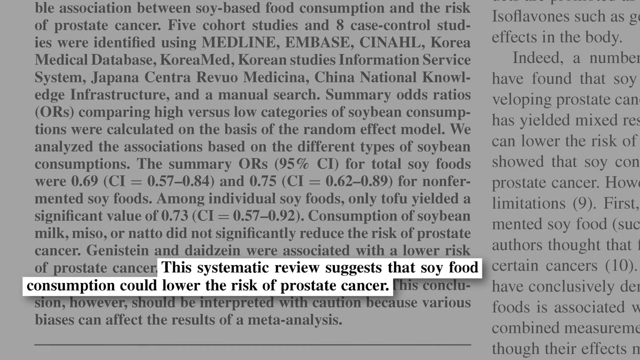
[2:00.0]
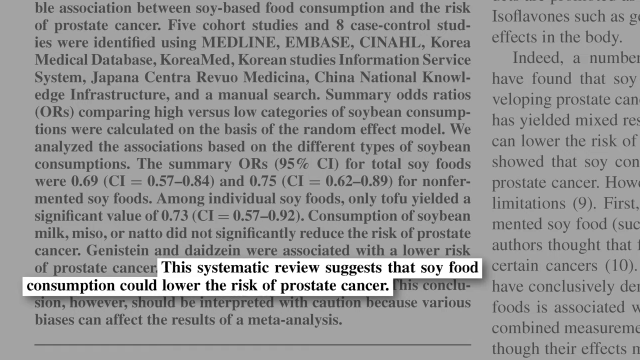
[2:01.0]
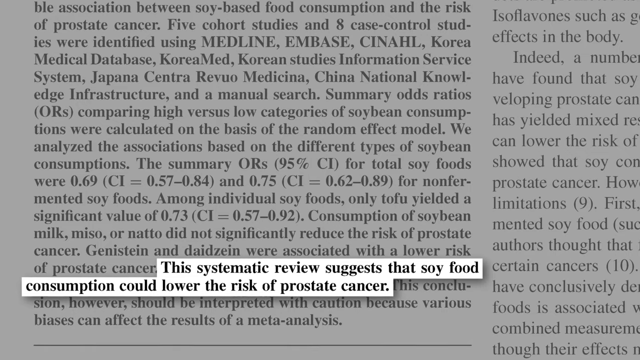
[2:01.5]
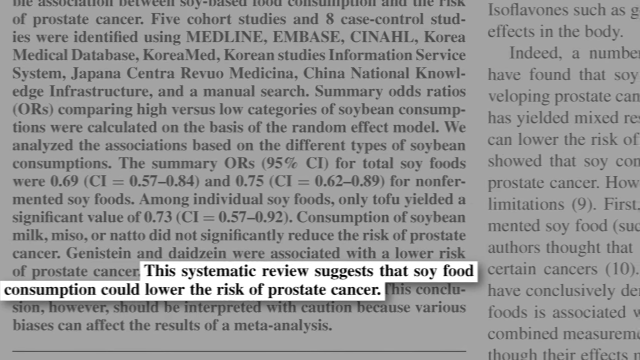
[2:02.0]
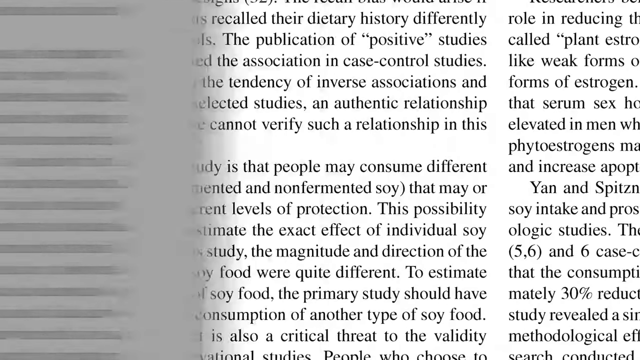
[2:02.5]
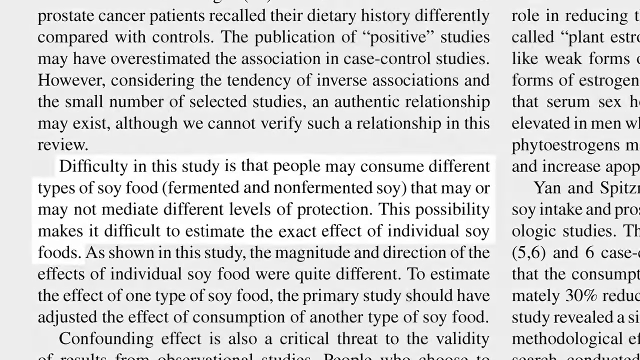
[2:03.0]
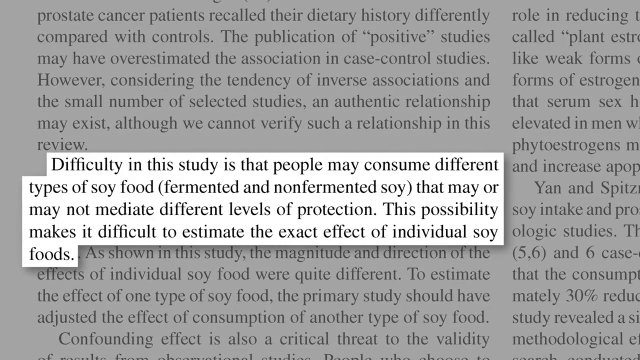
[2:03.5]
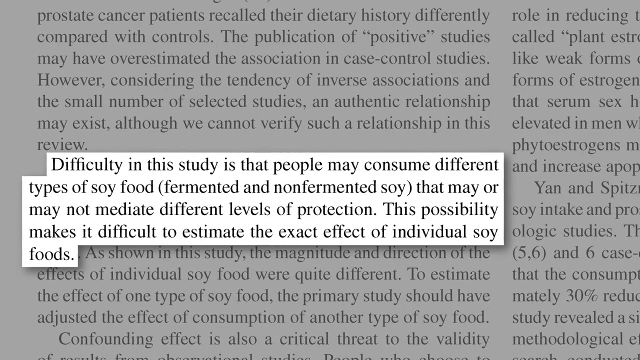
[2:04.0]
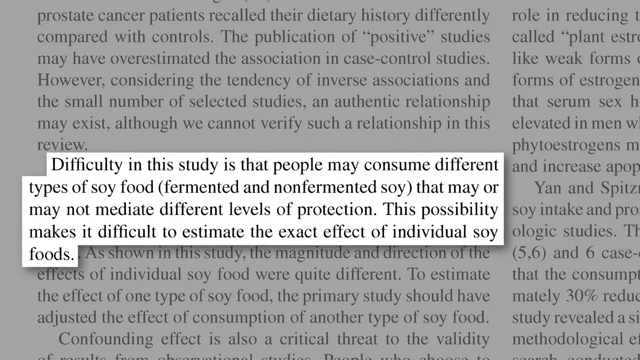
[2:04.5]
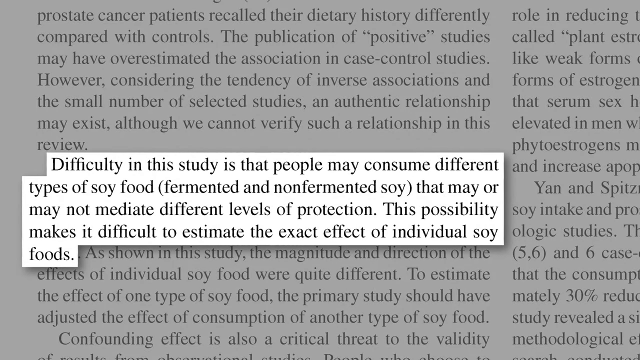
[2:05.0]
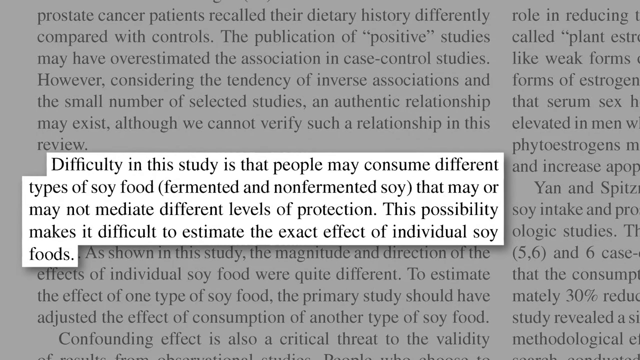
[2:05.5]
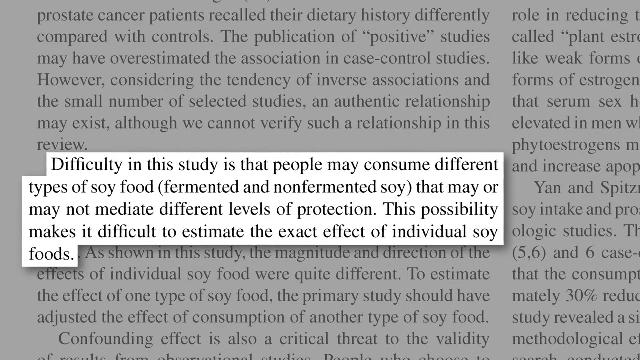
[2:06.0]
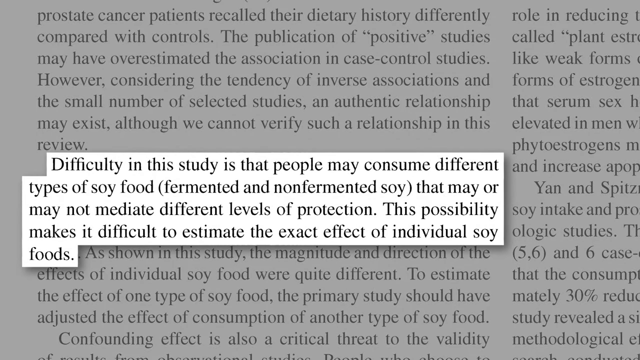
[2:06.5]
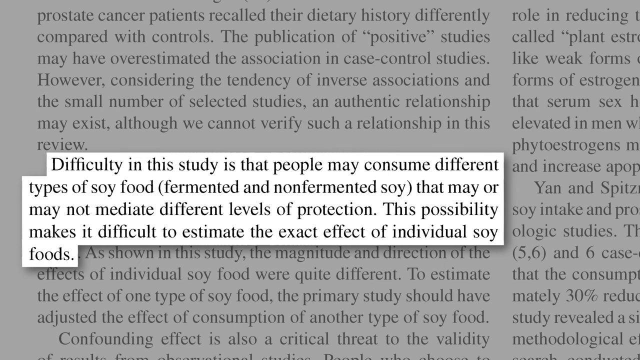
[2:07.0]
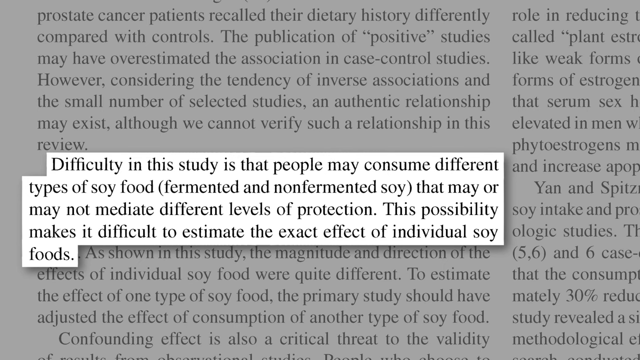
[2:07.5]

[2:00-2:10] A single cutout text from the paper reads "Difficulty in this study is that people may consume different types of soy food, fermented and non-fermented soy, that may or may not mediate different levels of protection. This possibility makes it difficult to estimate the exact effect of individual soy foods." Other text on the page in the background reads "The publication of positive studies may have overestimated the association in case control studies. However, considering the tendency of inverse associations in the small number of selected studies, an authentic relationship may exist although we can't verify such a relationship in this review."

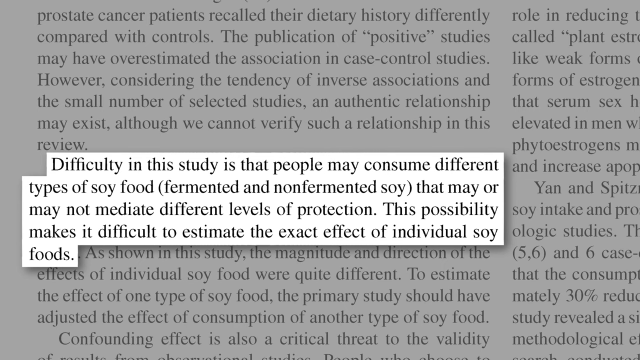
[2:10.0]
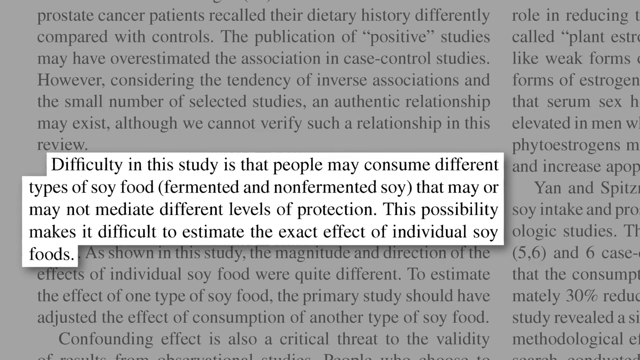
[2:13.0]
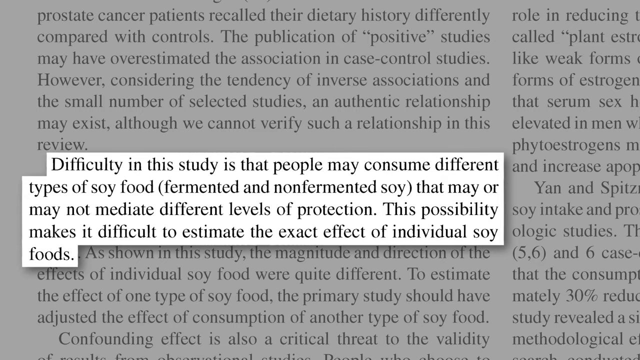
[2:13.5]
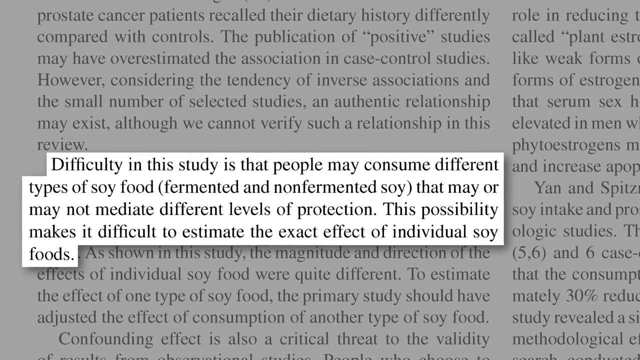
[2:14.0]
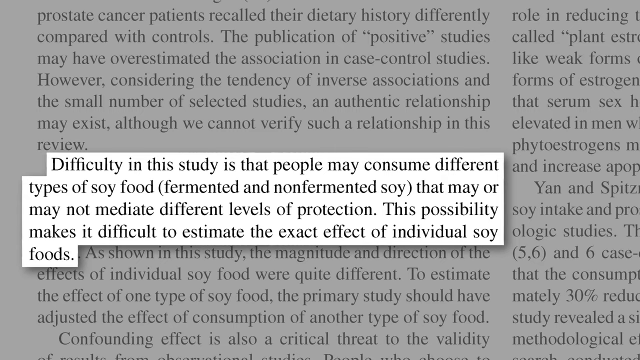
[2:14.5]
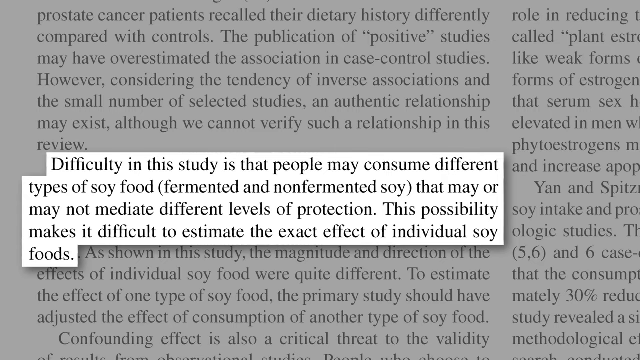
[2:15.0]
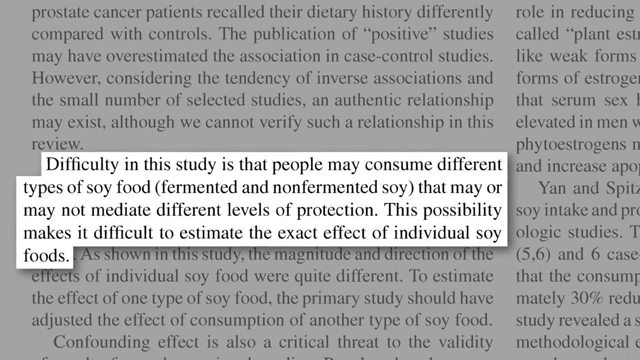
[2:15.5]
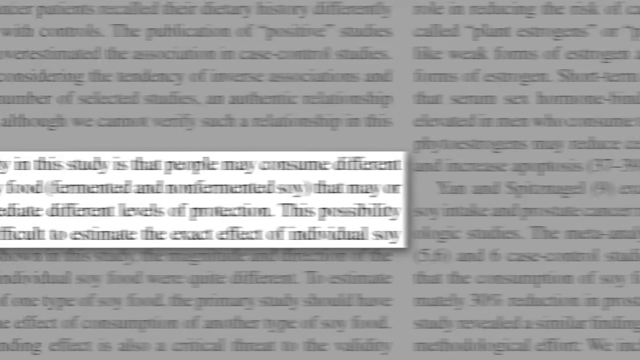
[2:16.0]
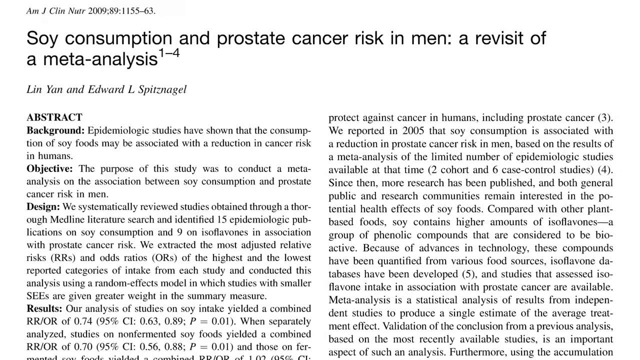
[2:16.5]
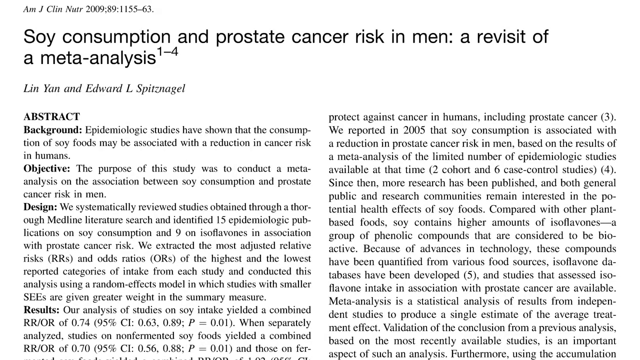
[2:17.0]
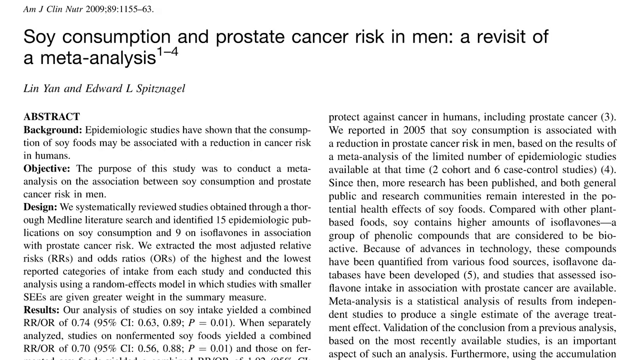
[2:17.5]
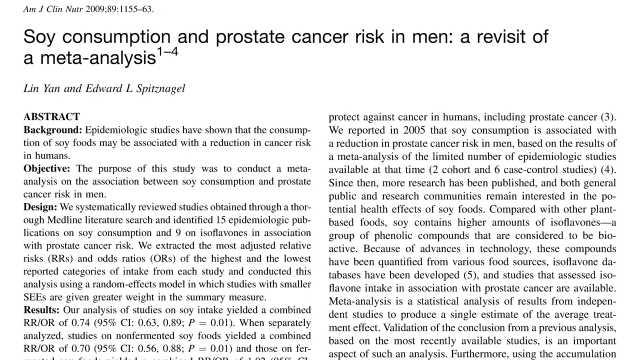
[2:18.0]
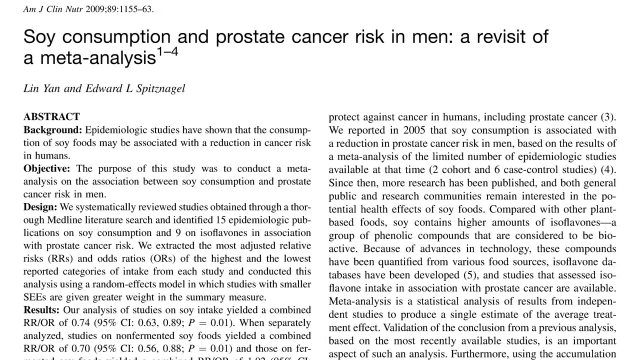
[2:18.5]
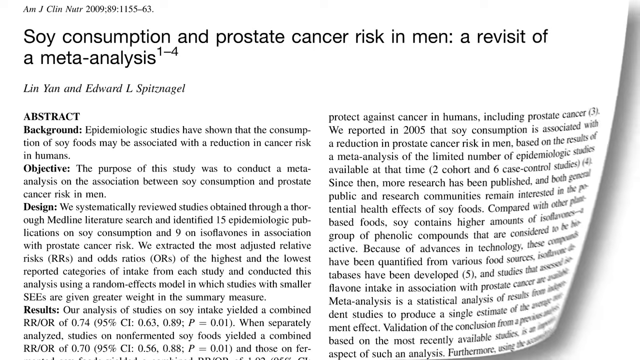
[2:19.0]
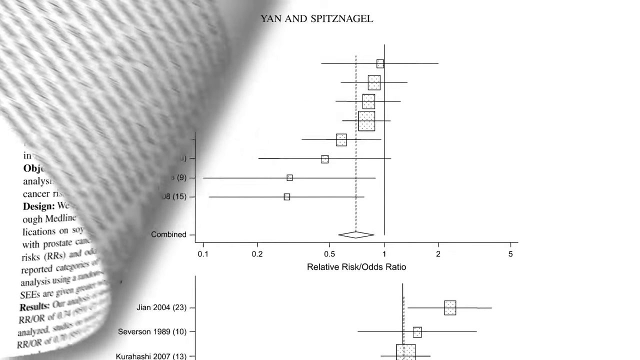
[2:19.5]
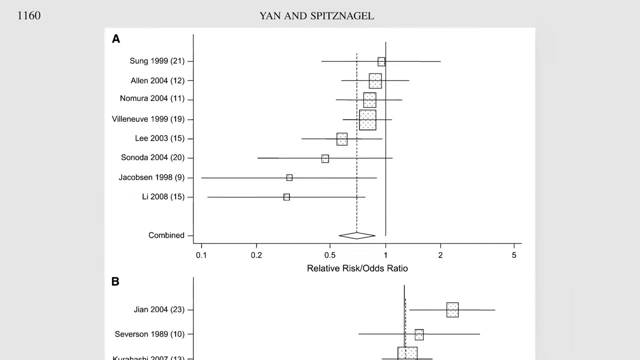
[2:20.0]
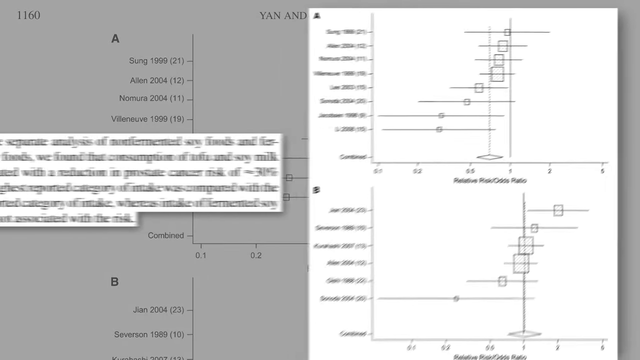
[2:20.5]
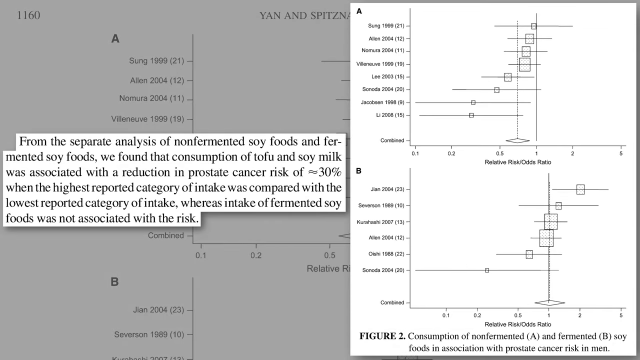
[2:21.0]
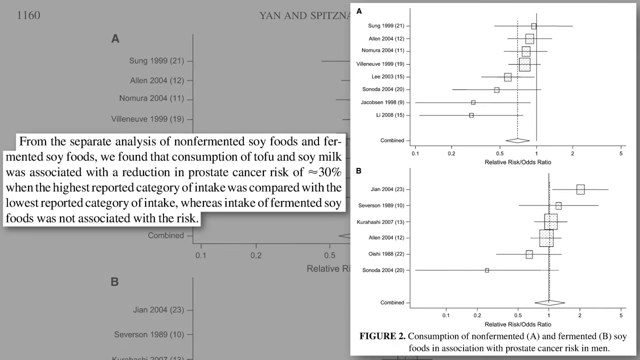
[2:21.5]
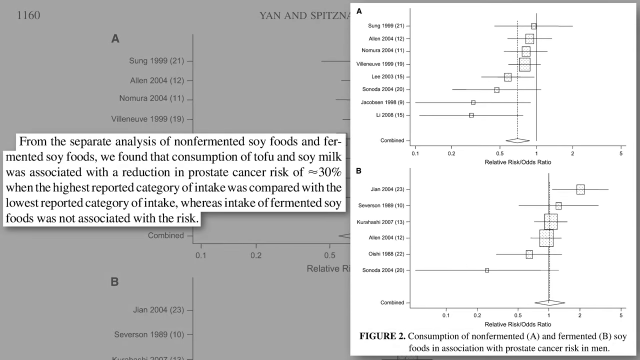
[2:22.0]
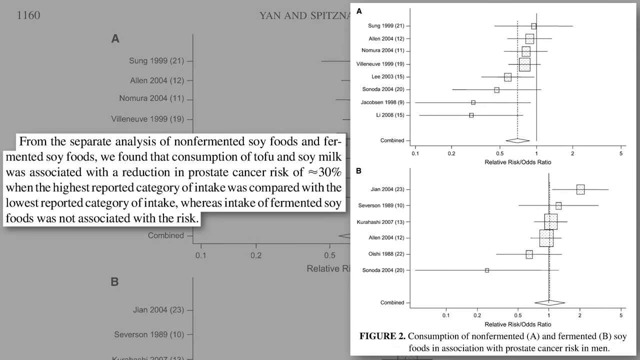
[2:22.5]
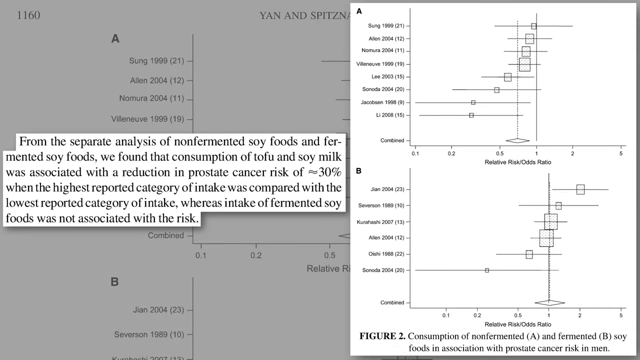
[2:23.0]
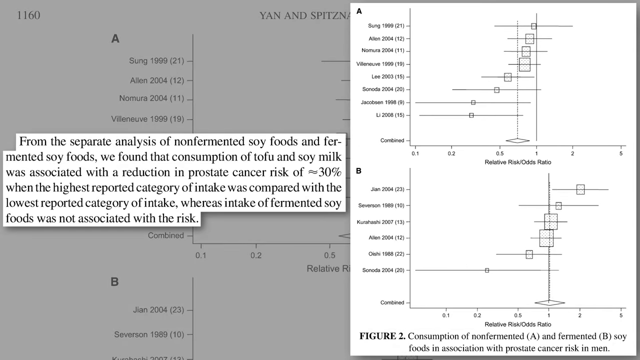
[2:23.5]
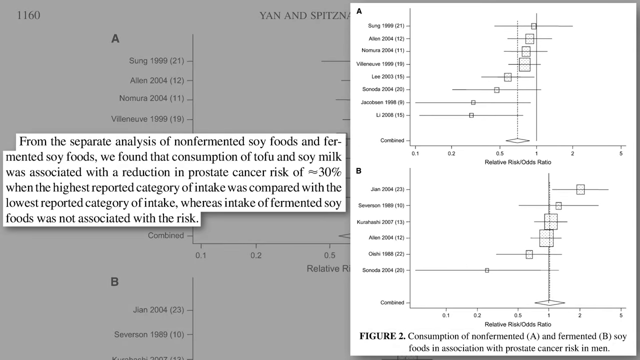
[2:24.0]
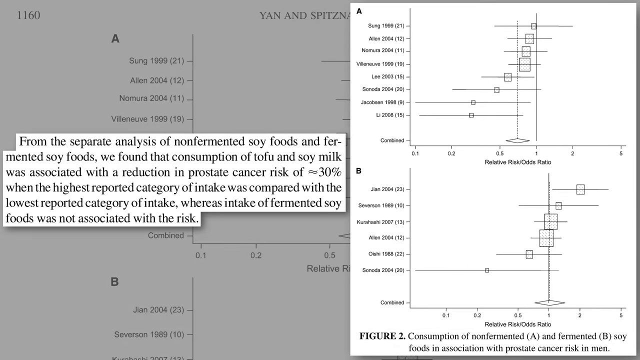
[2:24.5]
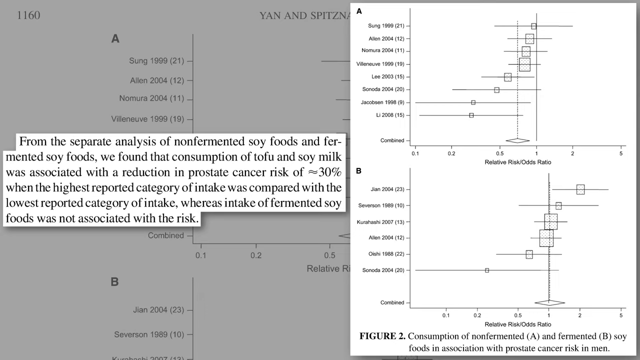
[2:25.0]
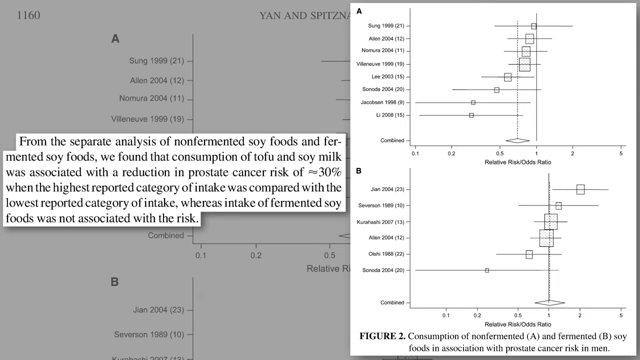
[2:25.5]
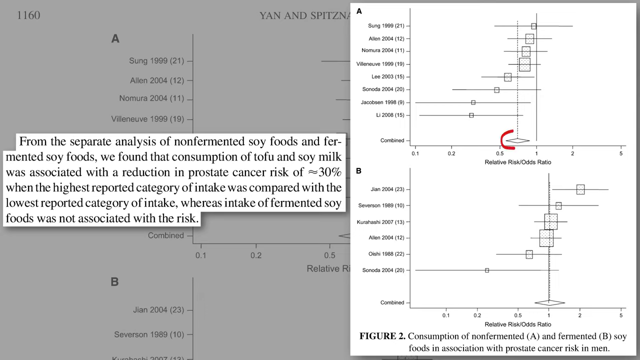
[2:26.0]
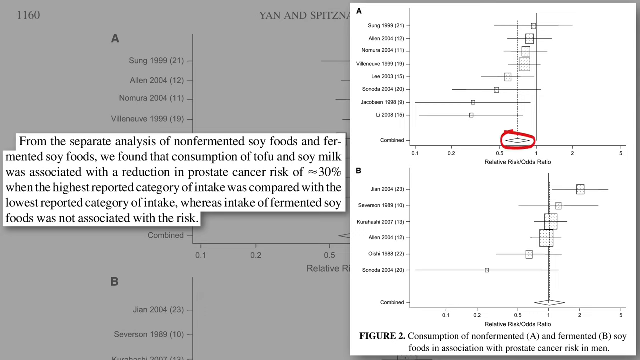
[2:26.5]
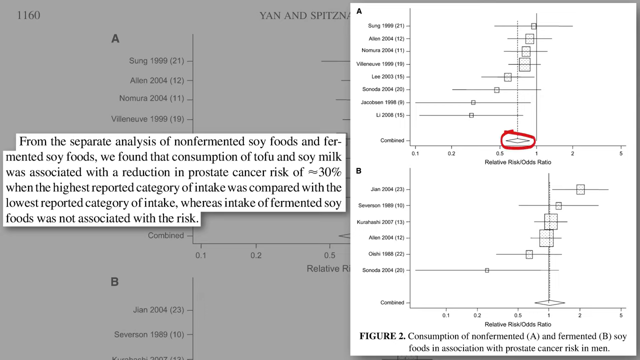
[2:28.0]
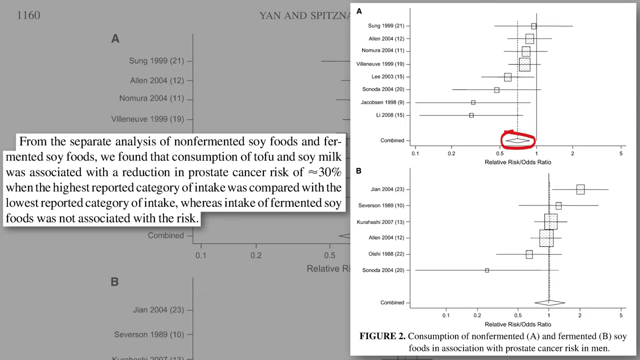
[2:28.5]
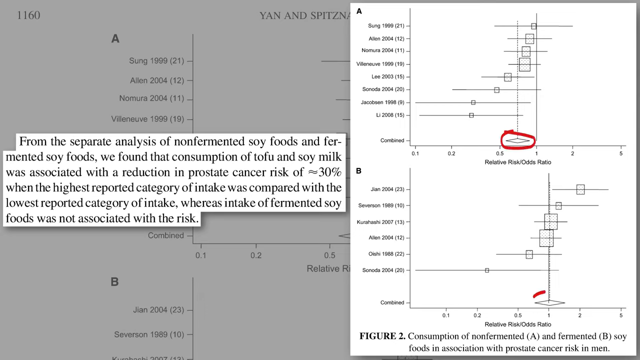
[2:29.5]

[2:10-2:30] A different article appears, by Lin Yan and Edward Spritznagel, titled "Soy consumption and prostate cancer risk in men: a revisit of a meta-analysis". Its abstract has background, objective and design sections. The background reads "Epidemiological studies have shown that the consumption of soy foods may be associated with a reduction in cancer risk in humans." The objective reads "The purpose of the study was to conduct a meta-analysis on the association between soy consumption and prostate cancer risk in men." There are about two columns full of text. The scene changes to a graph from Yan and Spritznagel about relative risk and odds ratio, with two sections, A and B, showing two different types of graphs. A cutout text pops up, reading "From the separate analysis of non-fermented soy foods and fermented soy foods, we found that the consumption of tofu and soy milk was associated with a reduction in prostate cancer risk of 30 percent when the highest reported category of intake was compared with the lowest reported category of intake, whereas intake of fermented soy food was not associated with the risk." One of the symbols on graph A is circled in red.